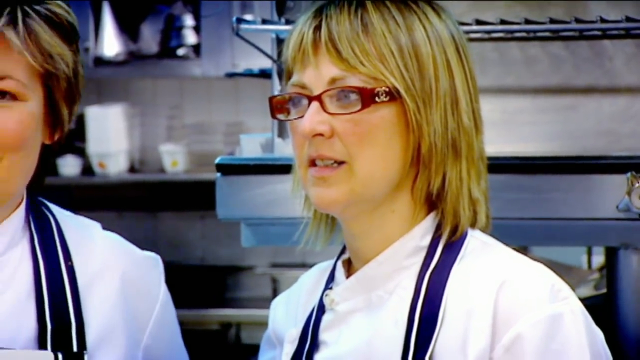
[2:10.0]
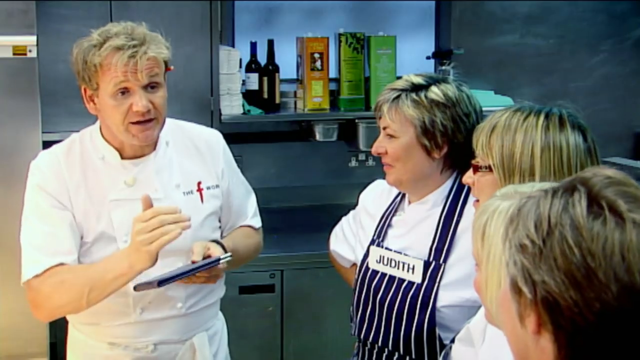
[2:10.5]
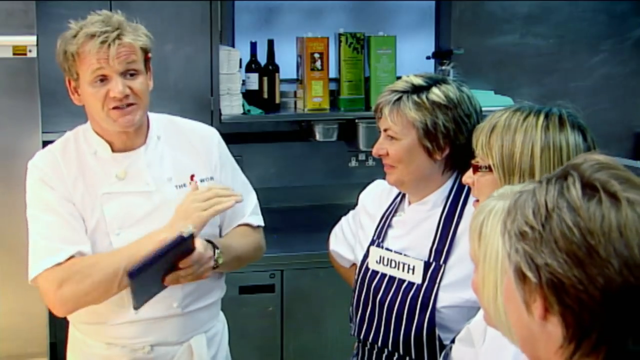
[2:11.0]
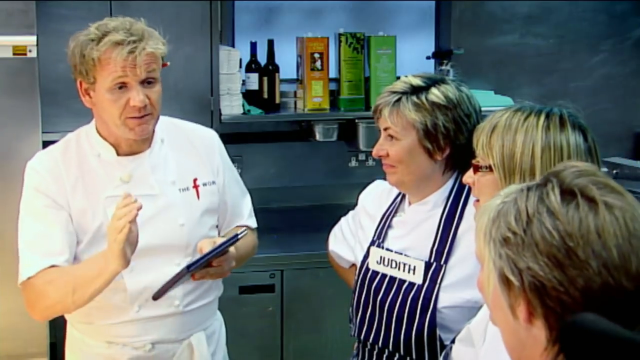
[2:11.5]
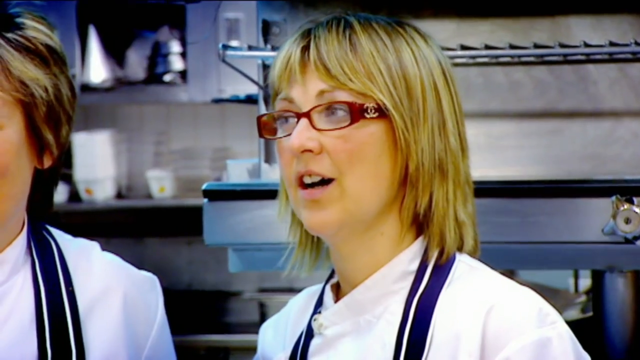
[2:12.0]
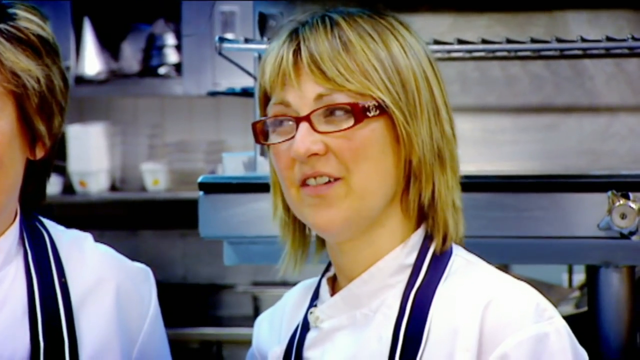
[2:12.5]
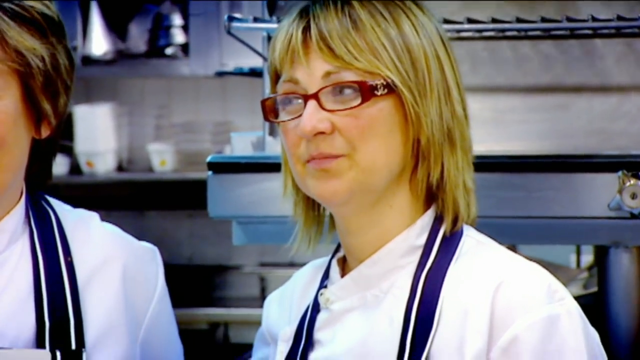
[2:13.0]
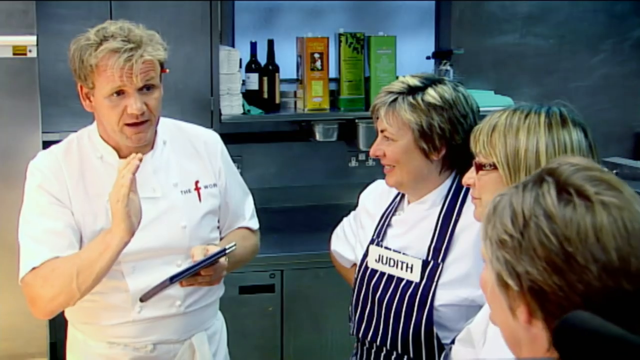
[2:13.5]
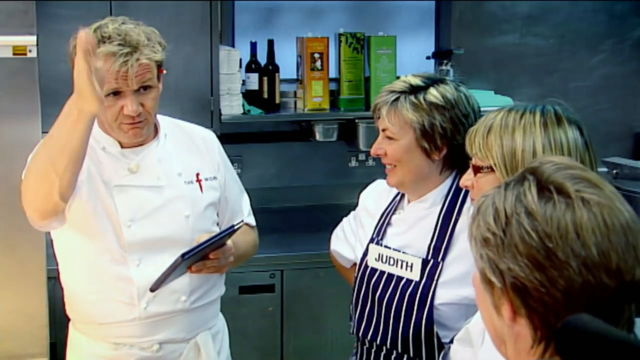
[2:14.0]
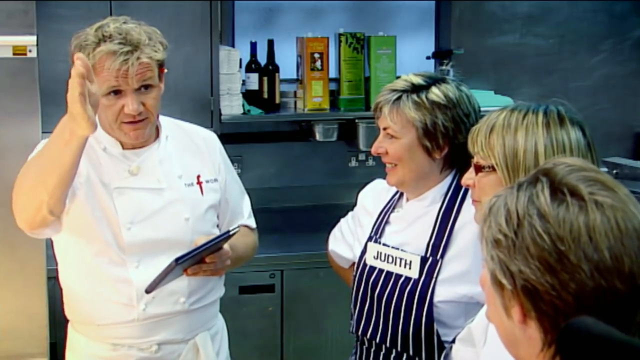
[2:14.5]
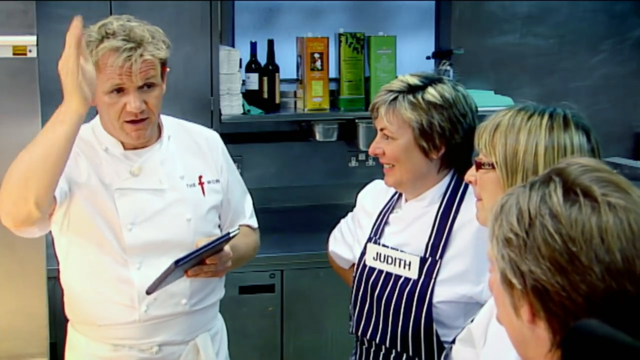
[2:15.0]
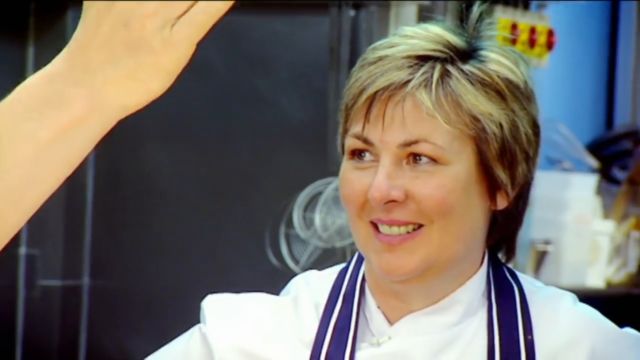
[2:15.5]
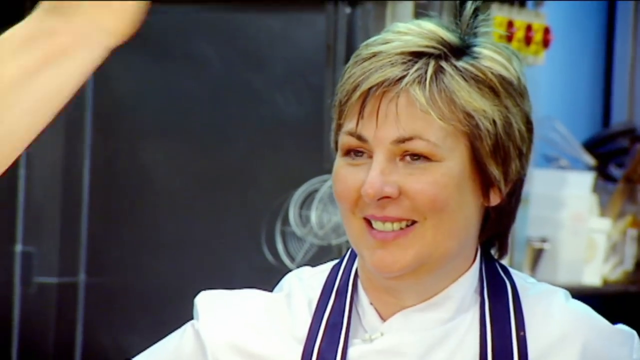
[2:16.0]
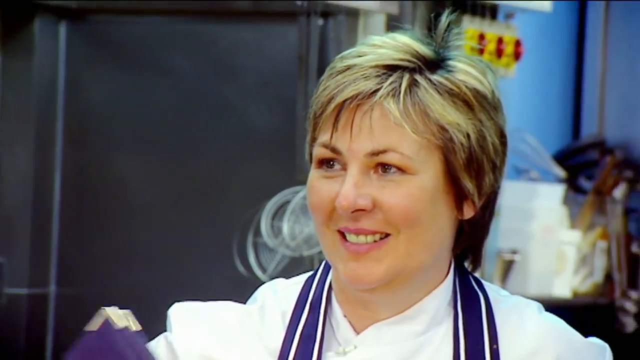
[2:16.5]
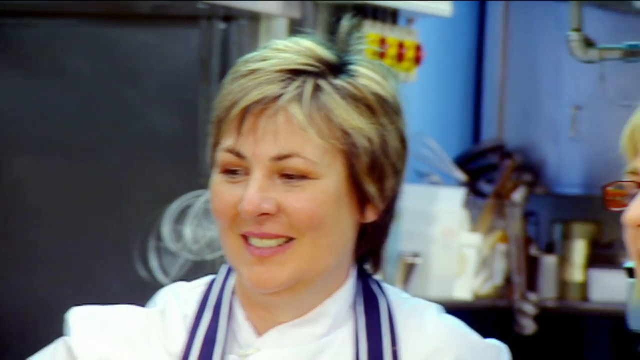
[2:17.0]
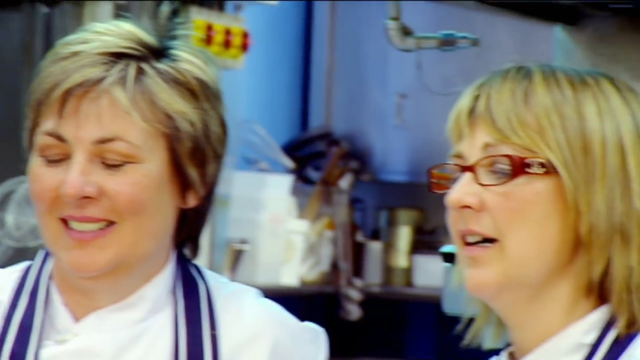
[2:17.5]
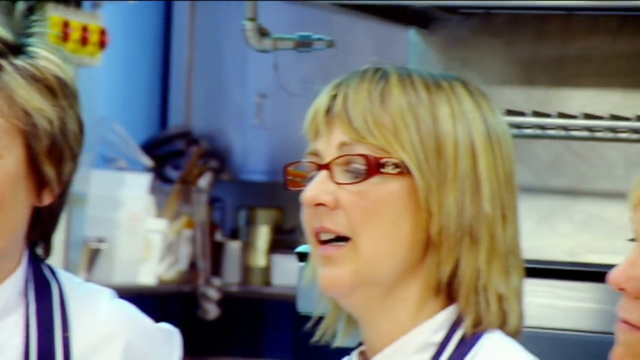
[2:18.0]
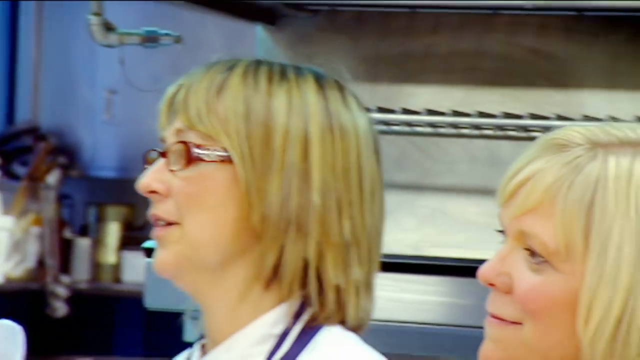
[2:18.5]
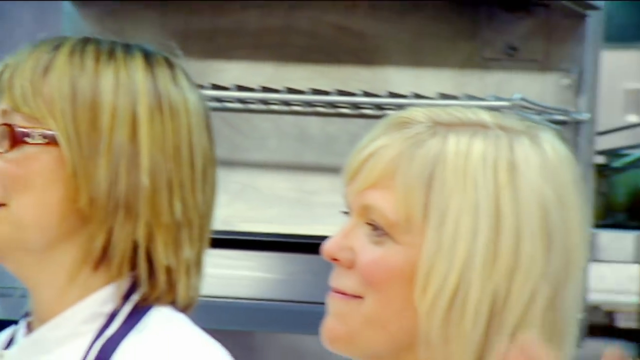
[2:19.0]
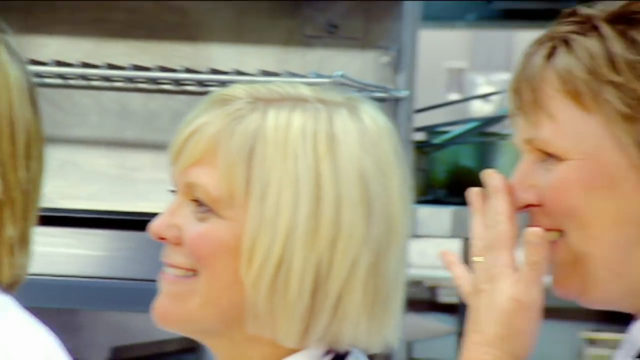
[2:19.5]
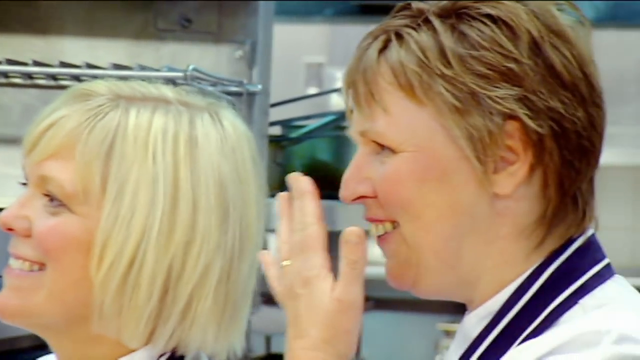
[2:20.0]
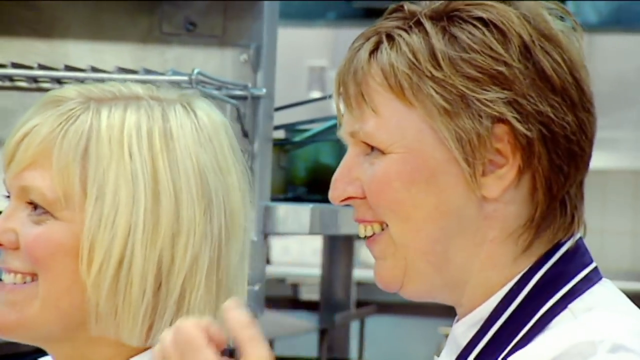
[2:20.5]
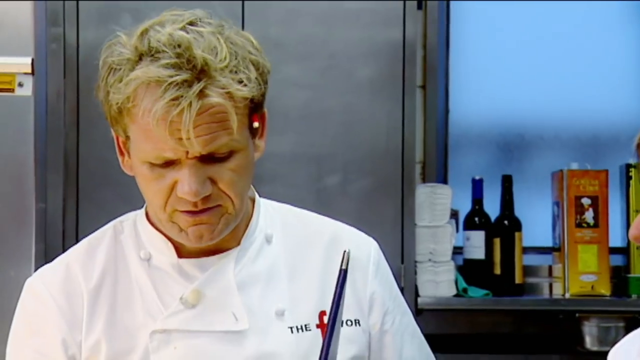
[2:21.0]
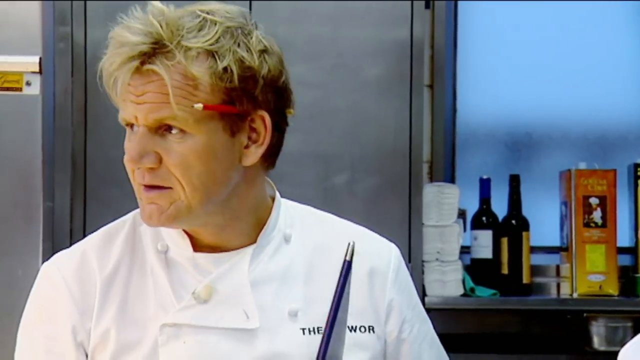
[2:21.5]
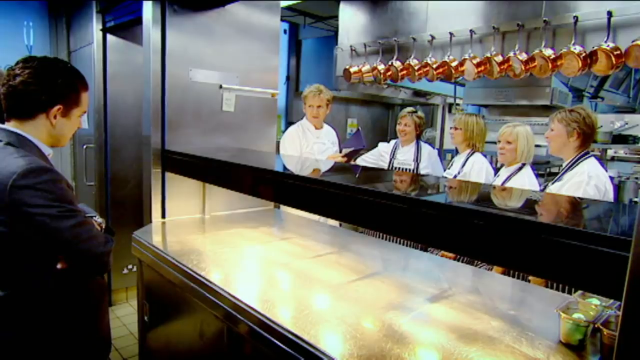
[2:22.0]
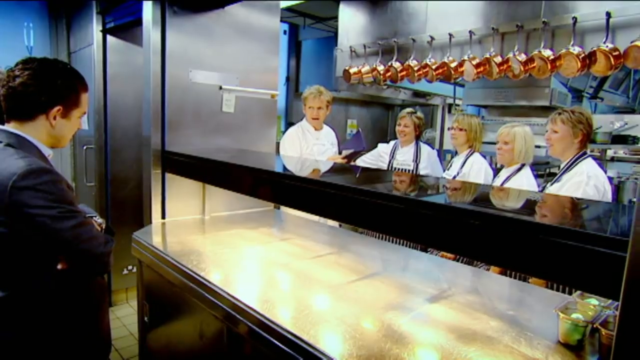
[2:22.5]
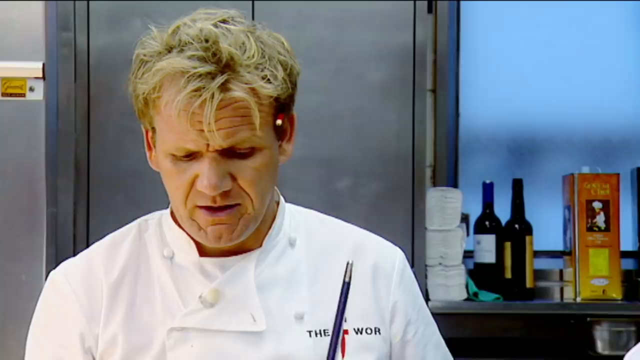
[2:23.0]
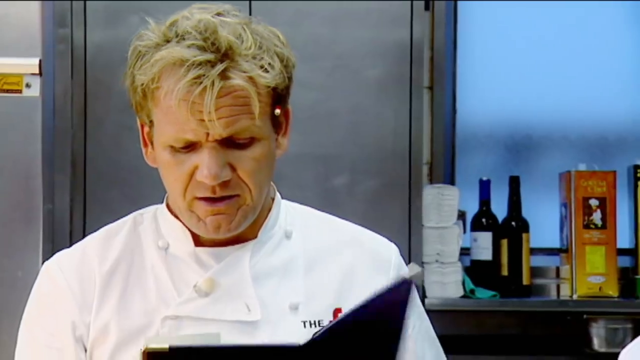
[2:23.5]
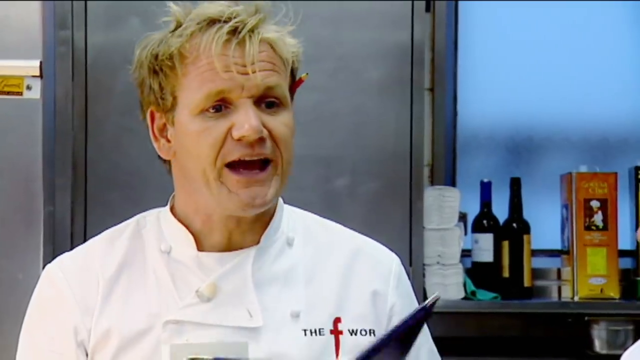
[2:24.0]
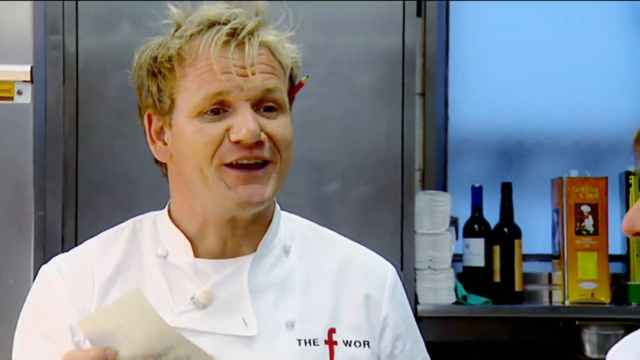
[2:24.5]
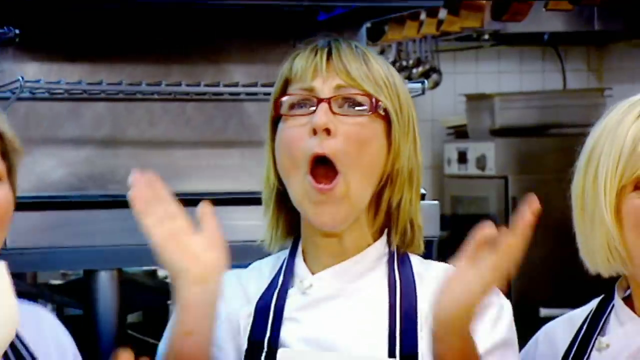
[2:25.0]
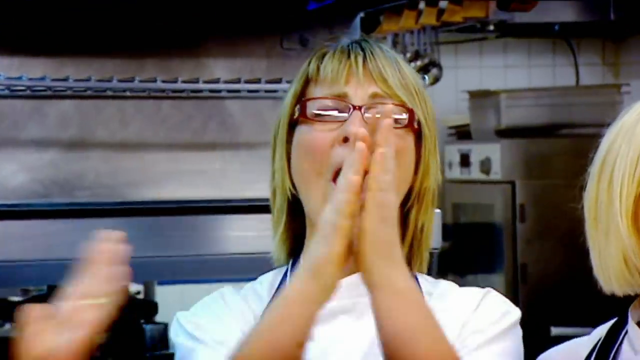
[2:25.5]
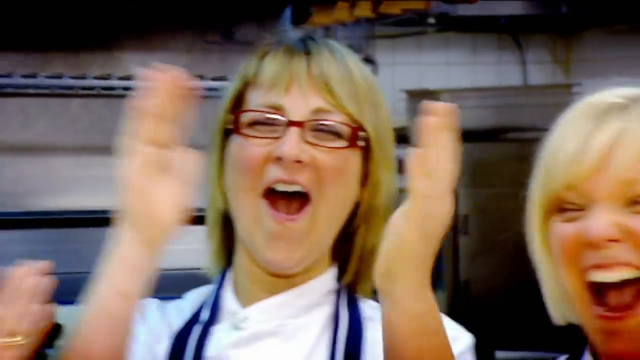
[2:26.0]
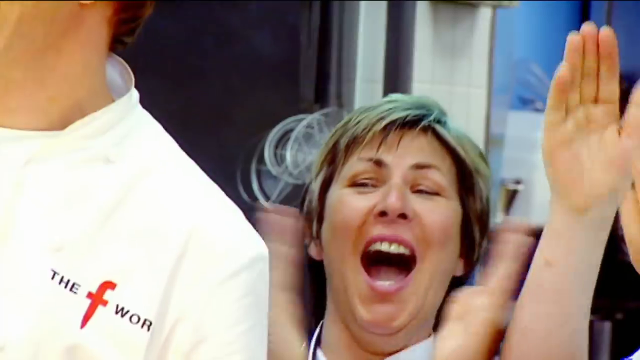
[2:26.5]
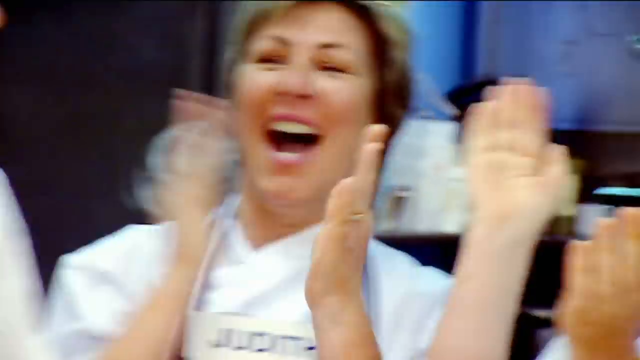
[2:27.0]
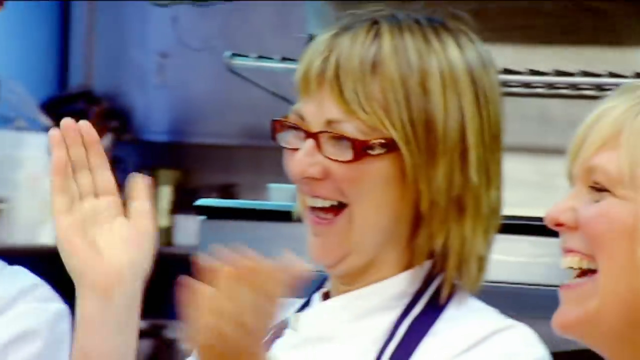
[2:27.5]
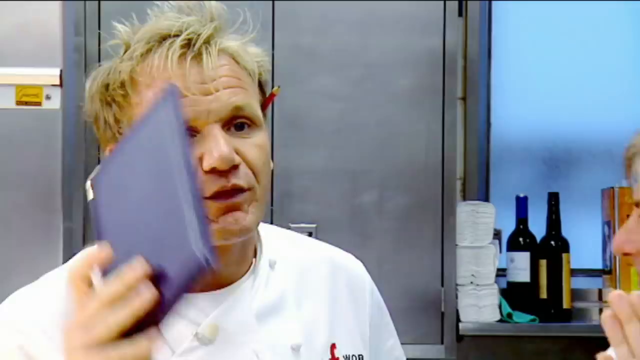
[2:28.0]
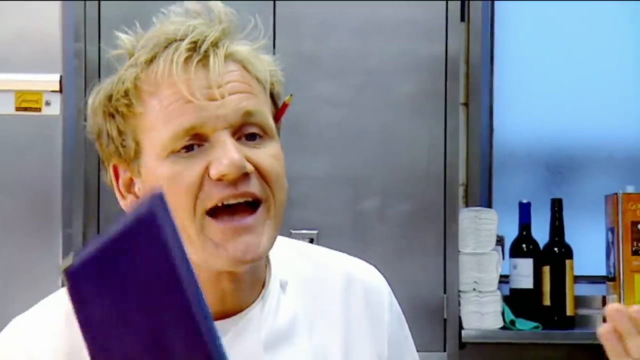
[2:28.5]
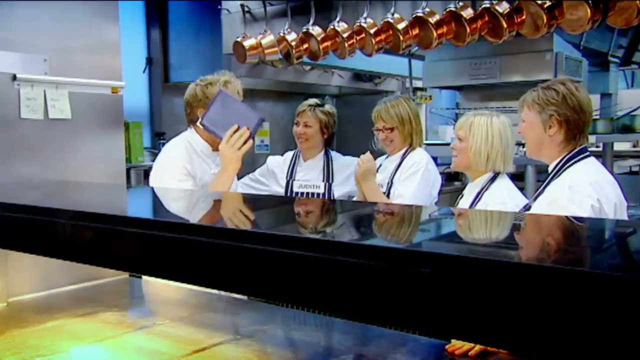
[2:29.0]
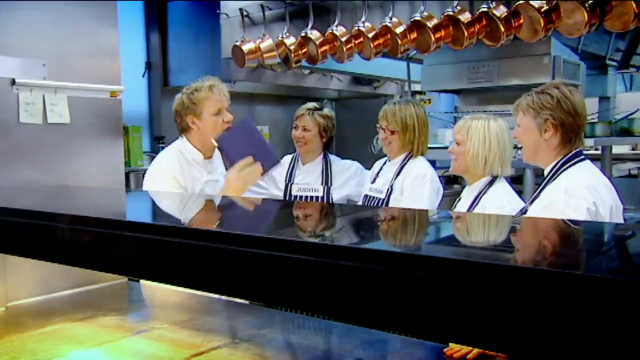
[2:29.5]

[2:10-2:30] In the kitchen, the chef who has been handed a menu holds it in his hands while talking to the other chefs, who look like junior chefs while he is the head. He makes gestures with his hands, as if directing and explaining to them. They are all dressed in white with blue striped aprons and listen attentively, smiling while he talks. There are four women, who are the waitresses. He says something that makes them clap their hands and laugh loudly, while he continues talking.